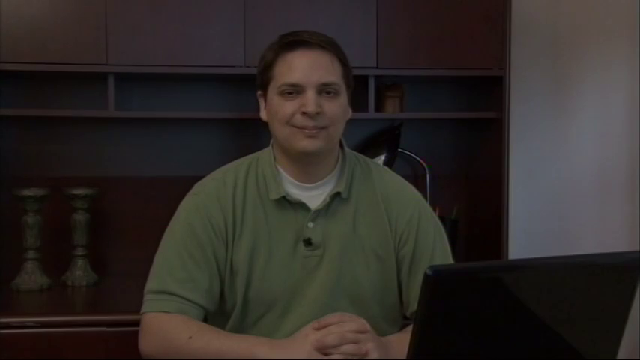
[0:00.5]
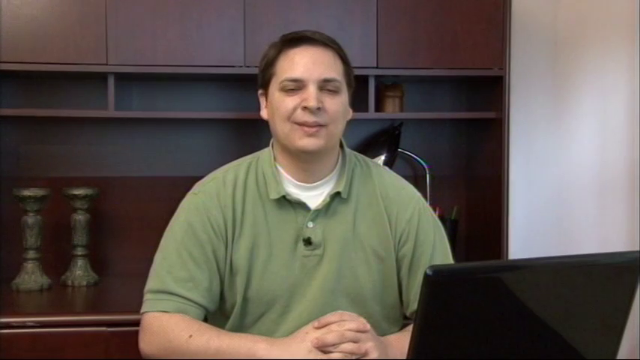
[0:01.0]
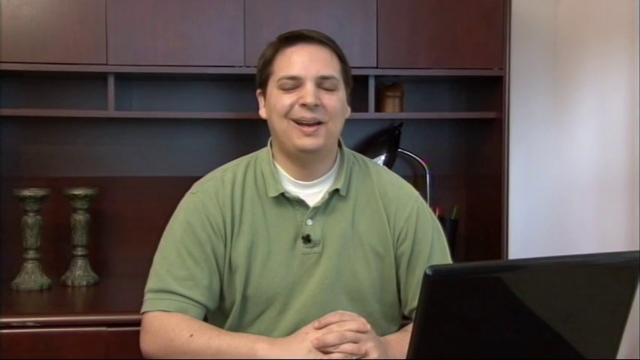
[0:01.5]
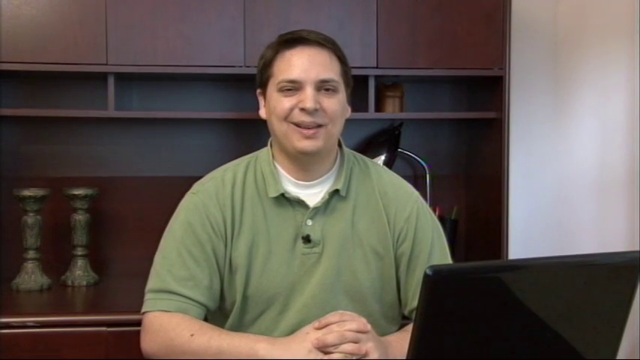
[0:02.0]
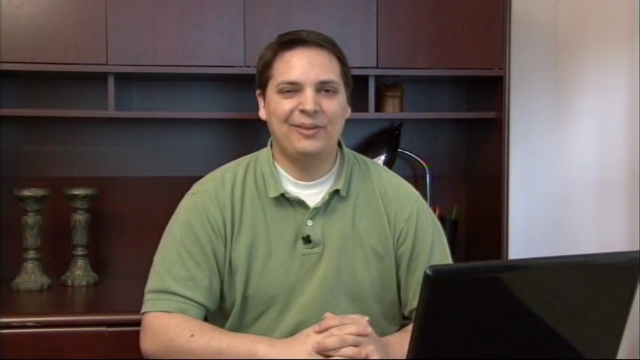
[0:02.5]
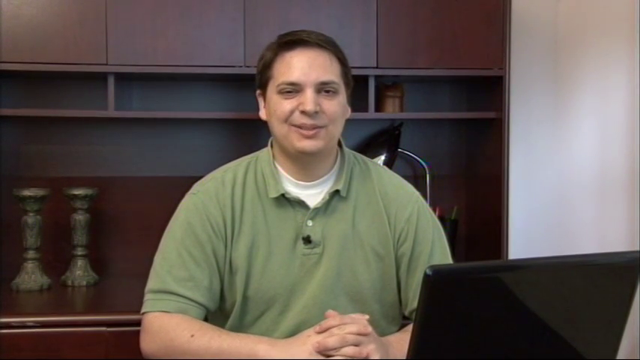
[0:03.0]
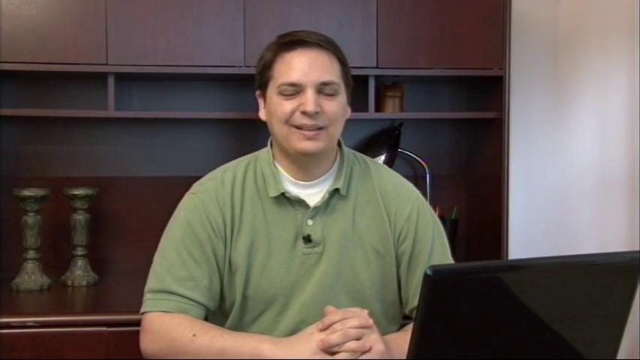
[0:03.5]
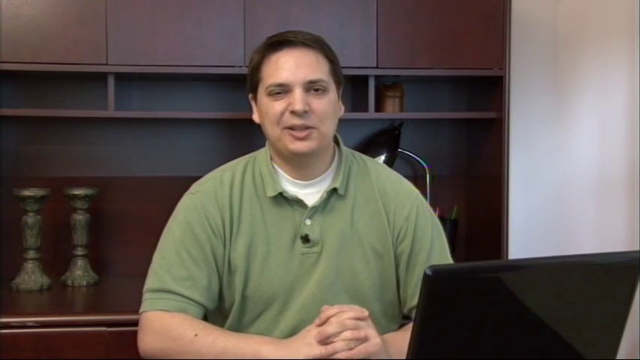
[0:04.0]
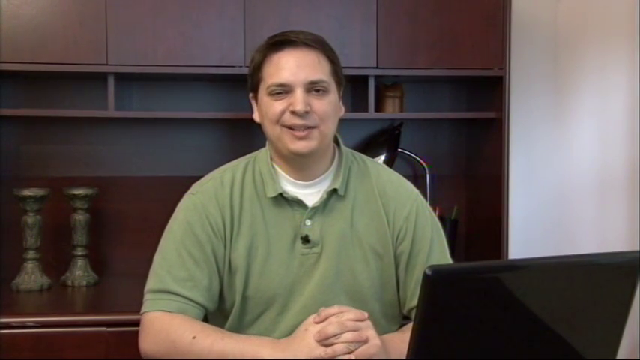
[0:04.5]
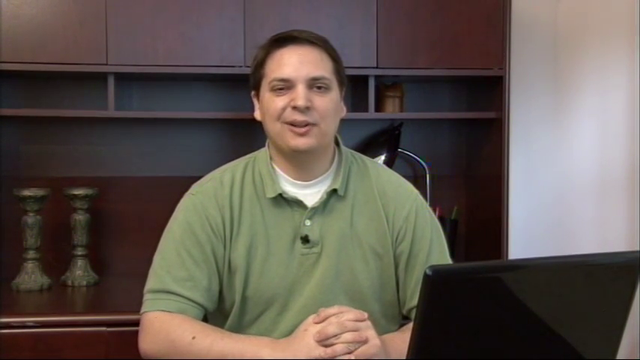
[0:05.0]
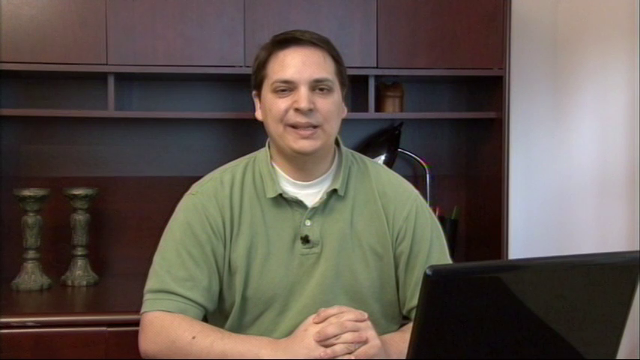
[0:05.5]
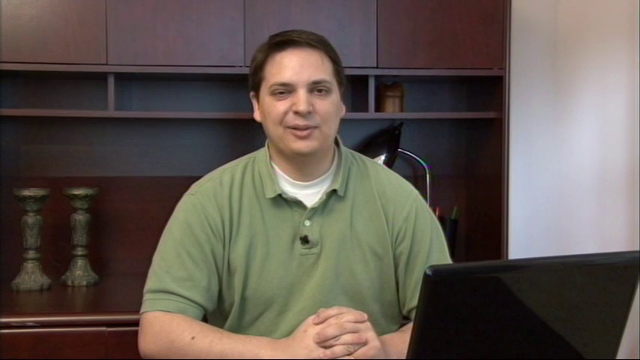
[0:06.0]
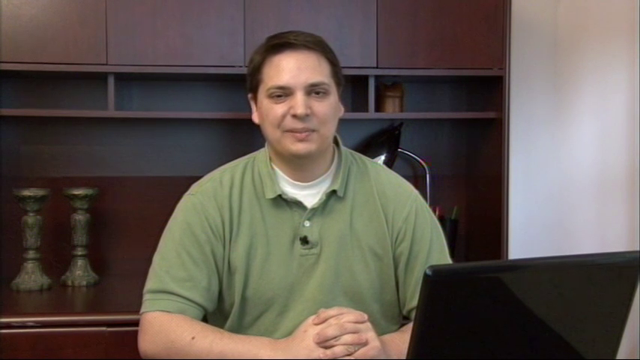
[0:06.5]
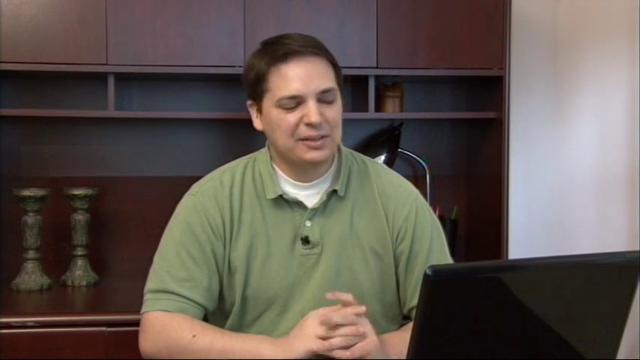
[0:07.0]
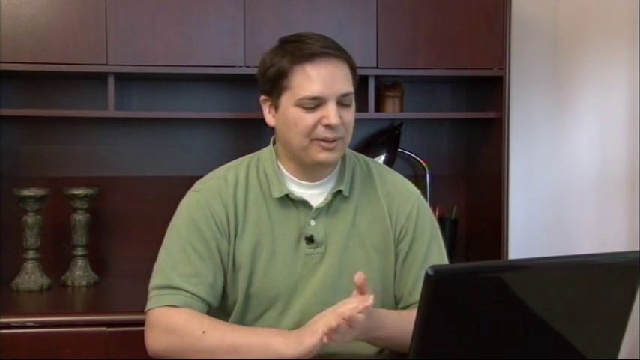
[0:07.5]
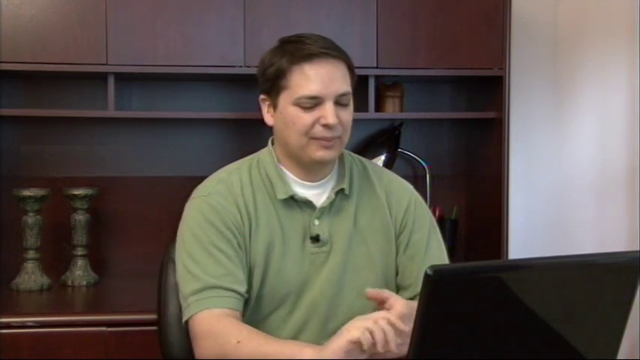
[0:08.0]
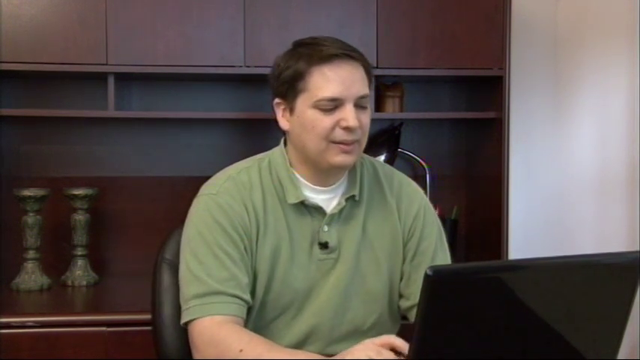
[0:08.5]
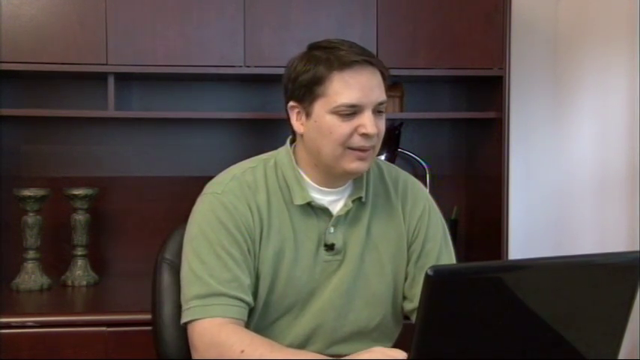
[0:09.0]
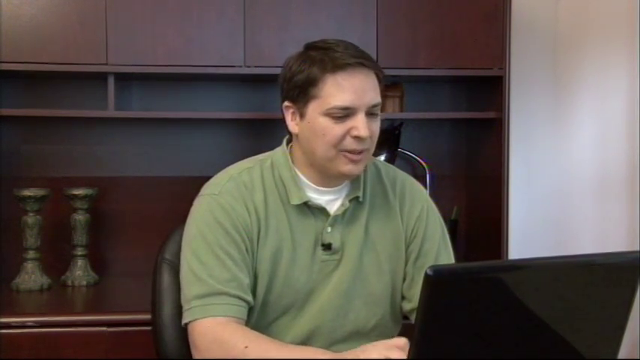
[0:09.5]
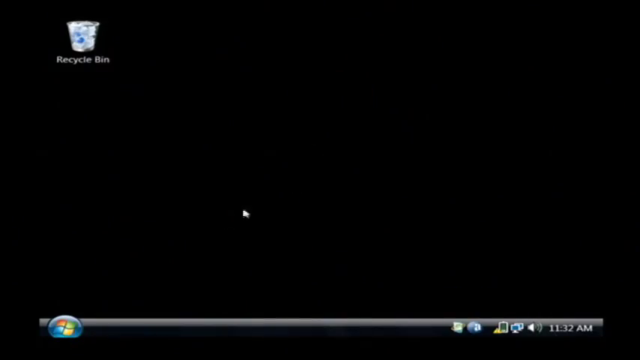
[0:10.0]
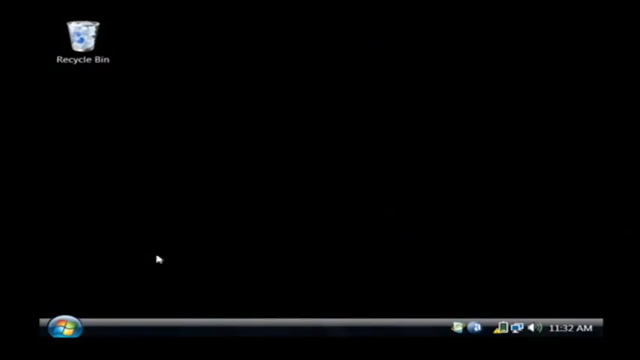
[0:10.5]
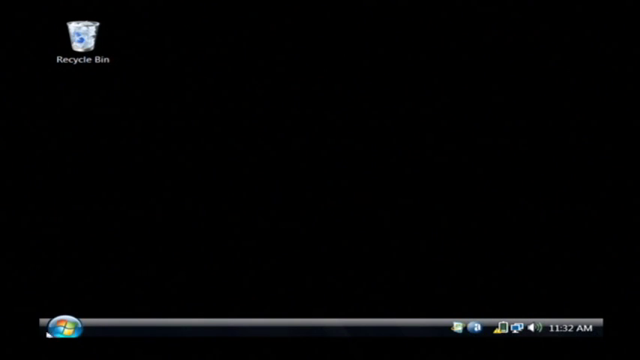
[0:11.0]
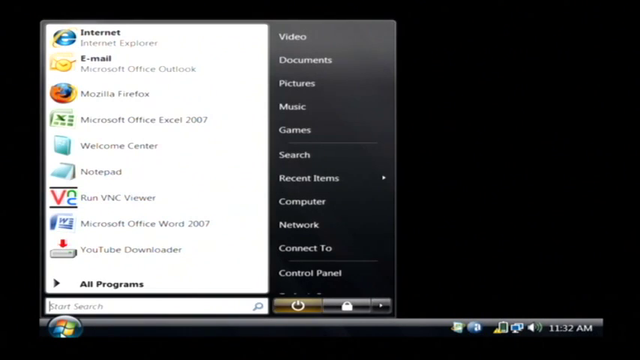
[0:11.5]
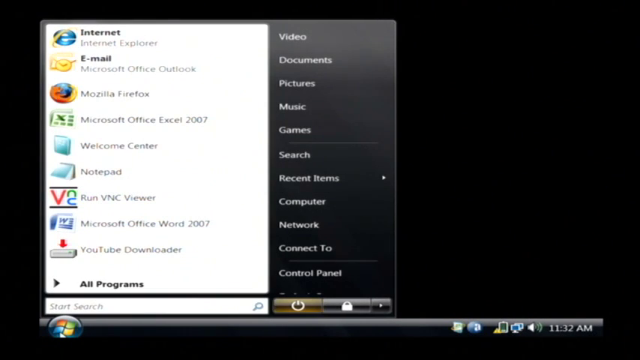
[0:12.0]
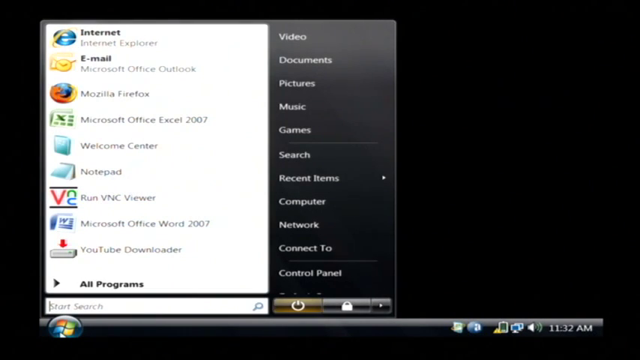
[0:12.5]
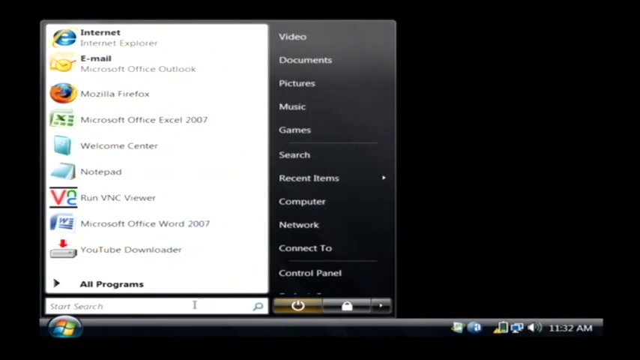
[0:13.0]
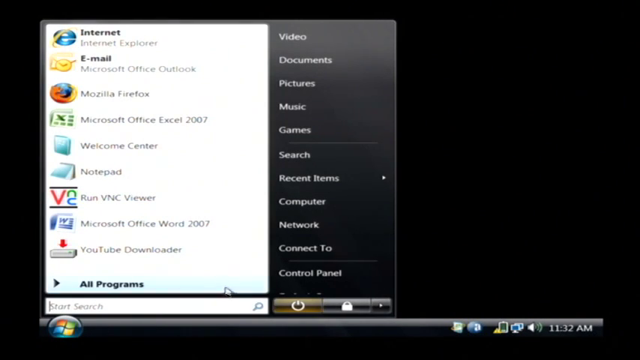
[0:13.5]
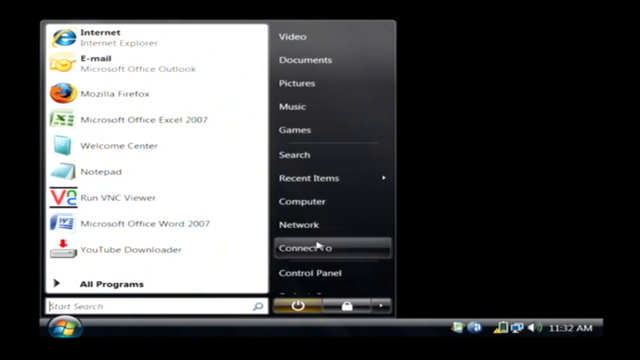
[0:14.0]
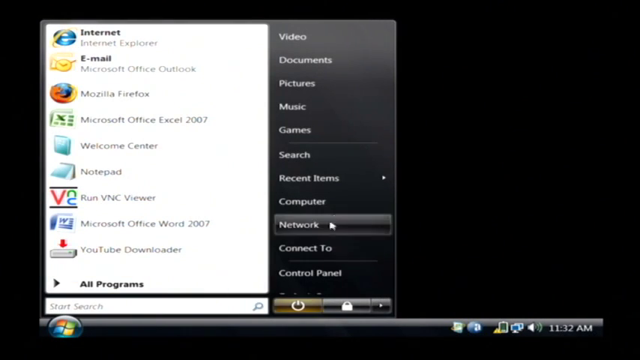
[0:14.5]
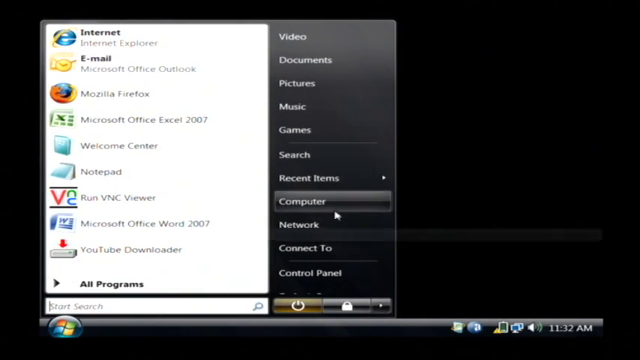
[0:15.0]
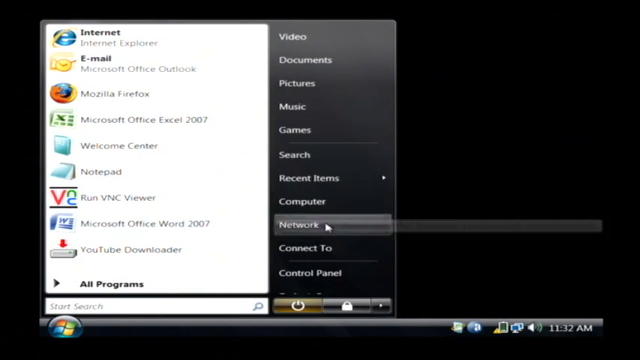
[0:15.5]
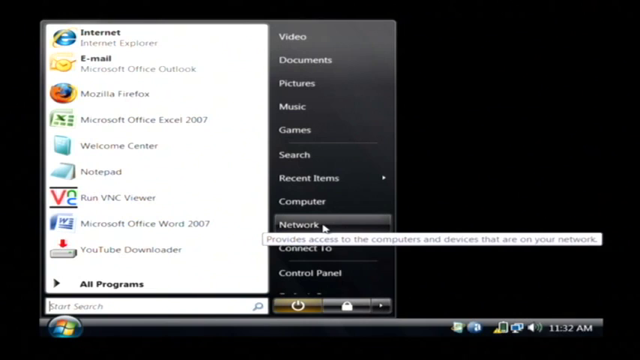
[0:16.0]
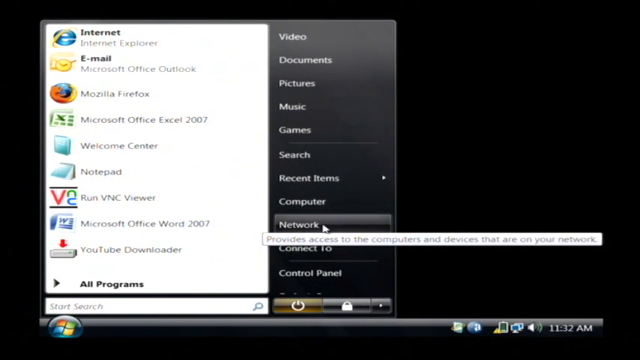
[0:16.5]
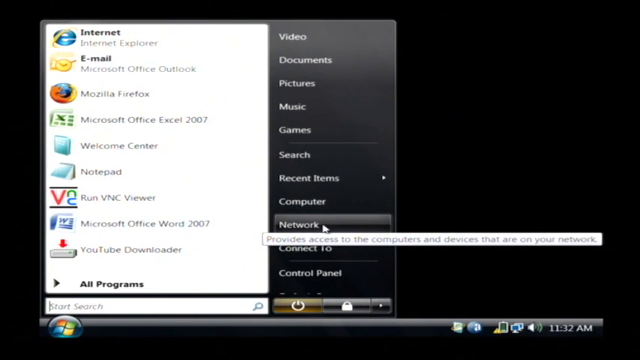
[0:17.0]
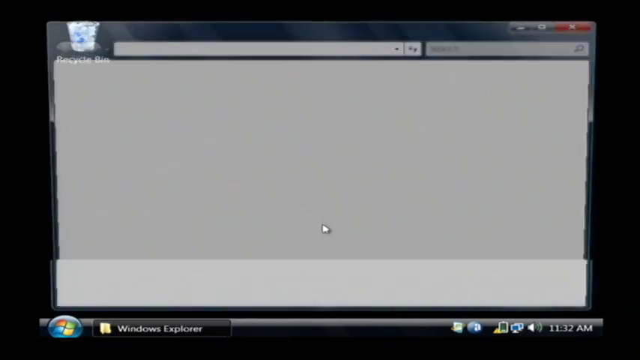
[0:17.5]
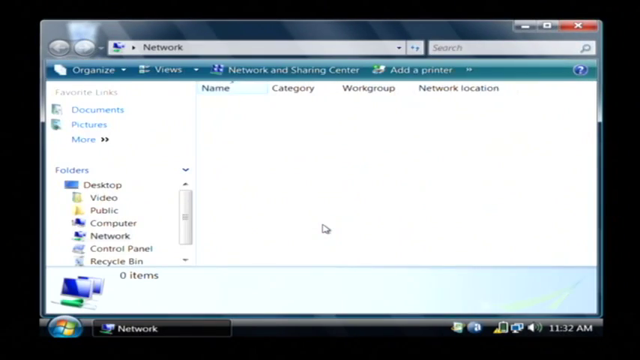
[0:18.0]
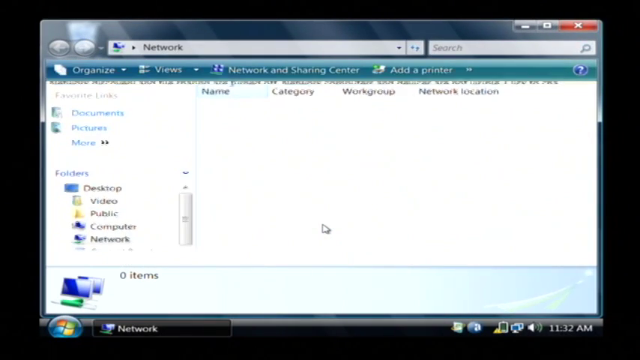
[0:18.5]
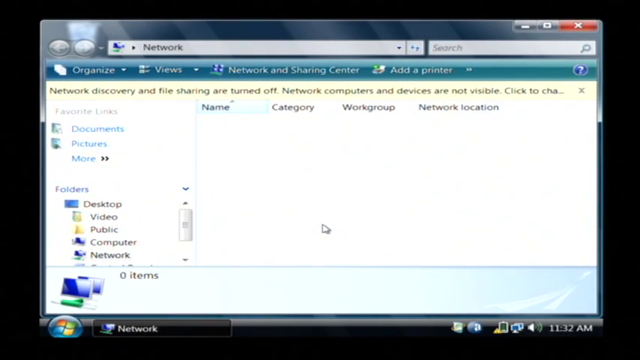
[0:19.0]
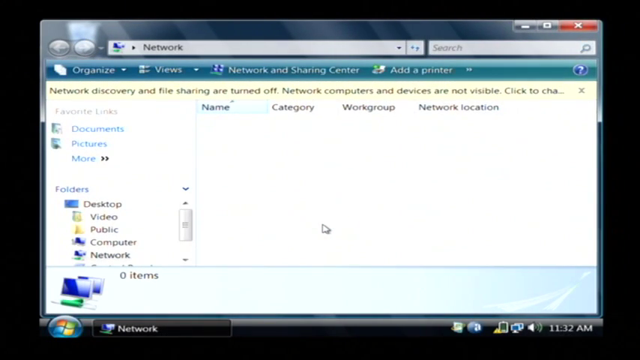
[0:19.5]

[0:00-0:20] The background appears to be walnut or dark wood shelving. In the lower left area of the screen there is a pair of candlesticks that appear to be green, and there looks to be a desk lamp behind as well. A man is sitting at the desk with his hands clasped in front of him, looking into the camera and smiling. He wears a green collared pullover shirt with a white t-shirt peeking out from underneath it. There is a monitor in front of him as he speaks to the camera. He then turns to the computer and the monitor and begins typing. The screen changes to a screenshot of his desktop computer: the background is black, a recycle bin image is in the upper left-hand corner, and the bar at the bottom of the screen has a Windows icon. He clicks on it and a pop-up window appears listing "Internet, Internet Explorer, Email, Microsoft Office Outlook, Mozilla Firefox, Microsoft Office Excel 2007, Welcome Center, Notepad, RunVNC Viewer, Microsoft Office Word 2007, YouTube Downloader" and an arrow for all programs. Next to that, a vertical black bar reads "Video, Documents, Pictures, Music, Games, Search, Recent Items, Computer, Network, Connect To, and Control Panel". He moves the mouse and selects Network, and a new window opens.